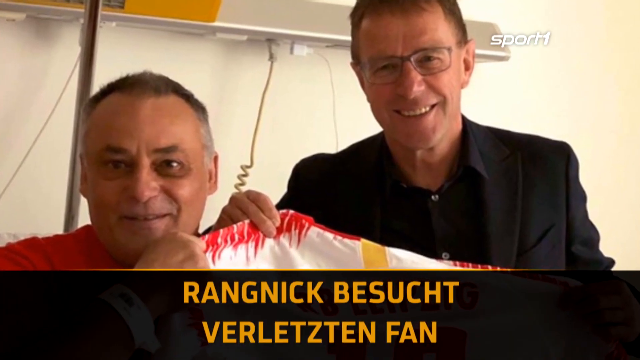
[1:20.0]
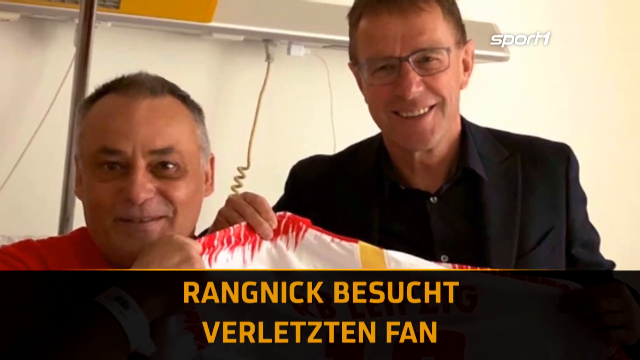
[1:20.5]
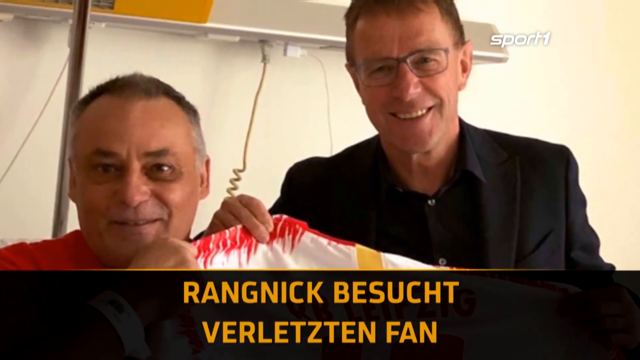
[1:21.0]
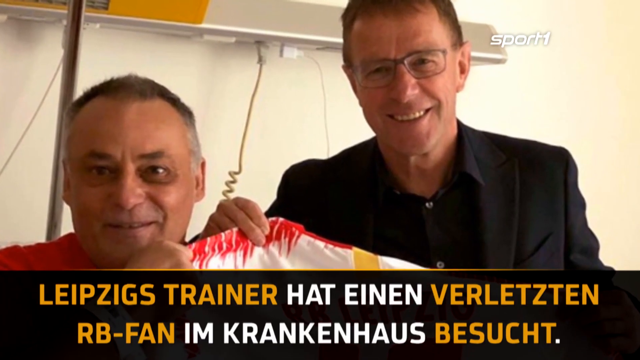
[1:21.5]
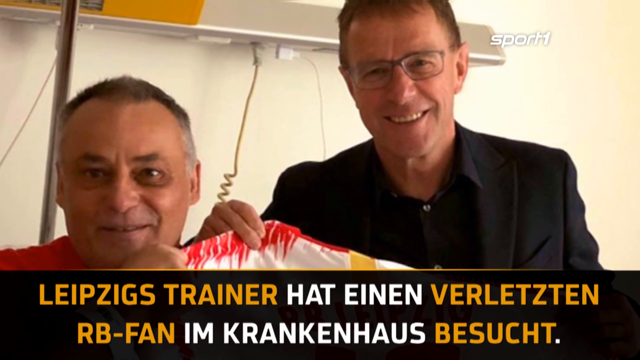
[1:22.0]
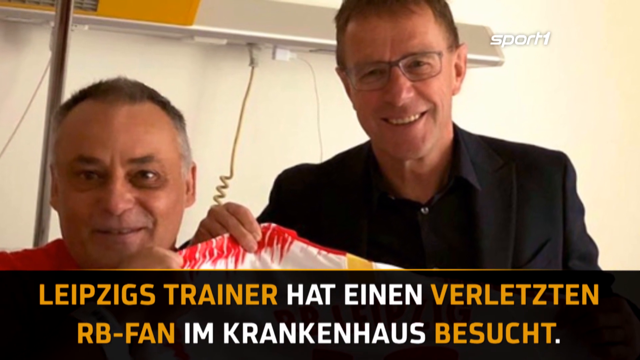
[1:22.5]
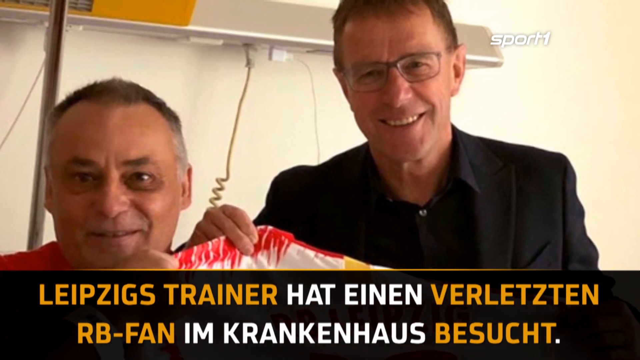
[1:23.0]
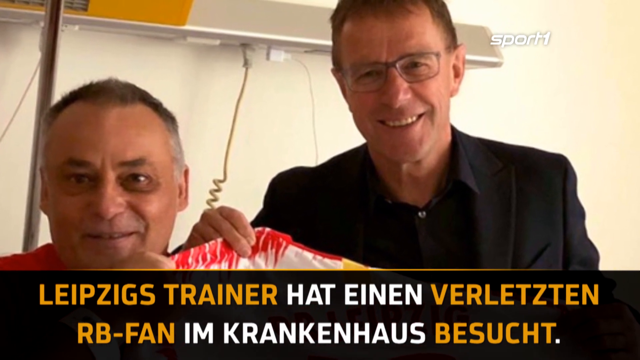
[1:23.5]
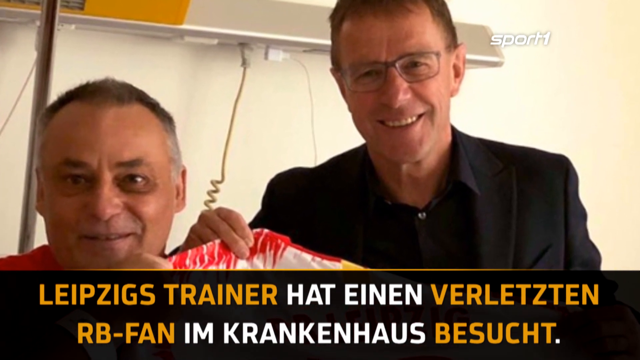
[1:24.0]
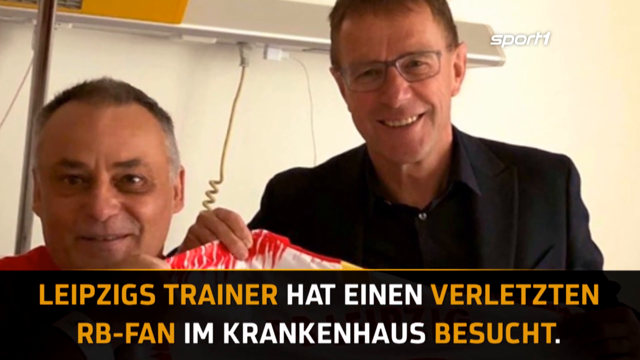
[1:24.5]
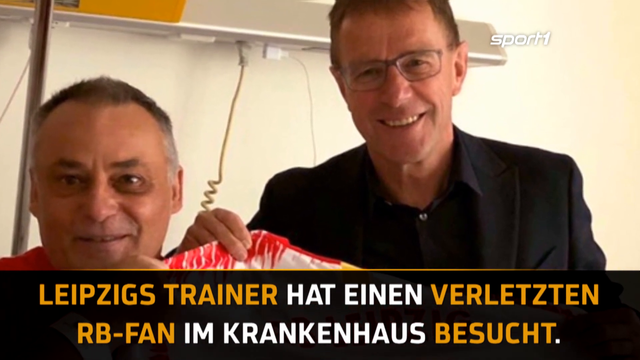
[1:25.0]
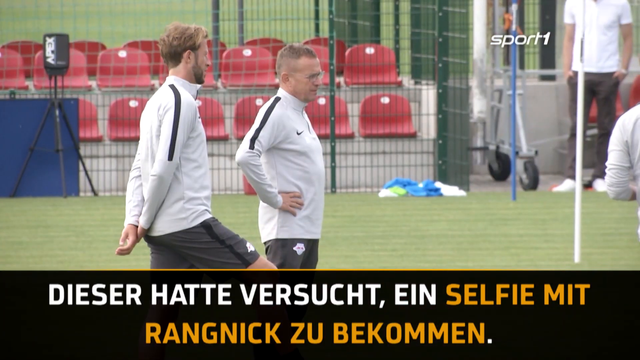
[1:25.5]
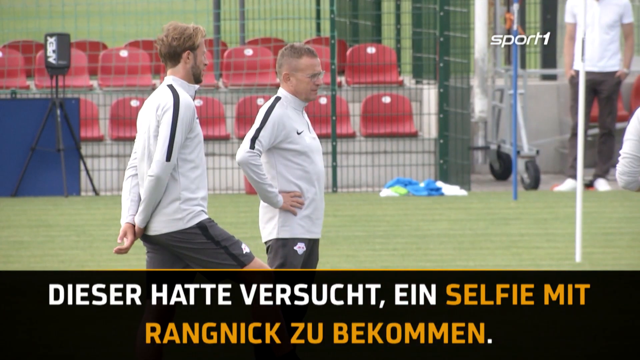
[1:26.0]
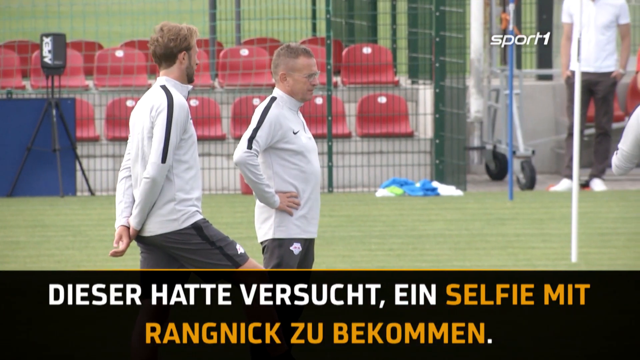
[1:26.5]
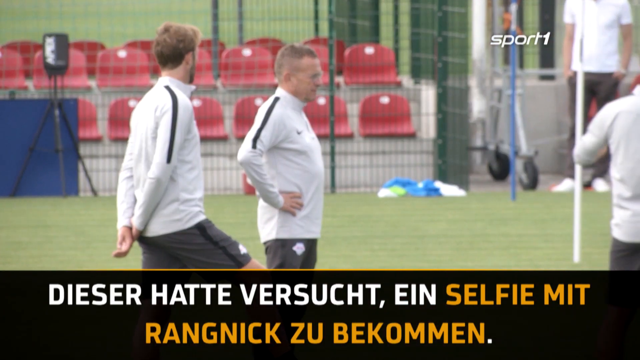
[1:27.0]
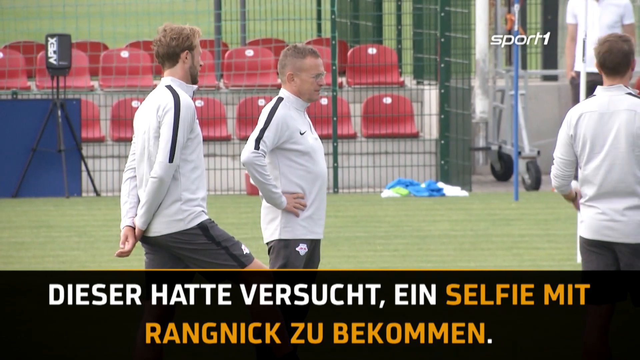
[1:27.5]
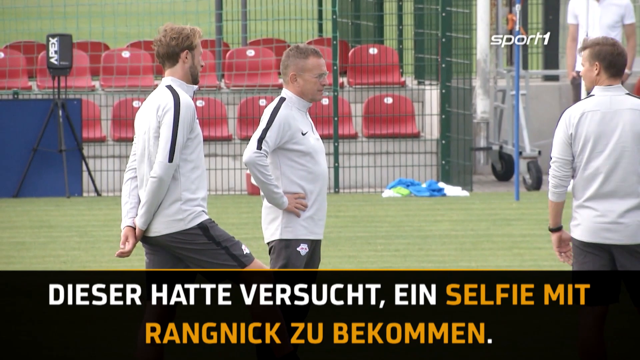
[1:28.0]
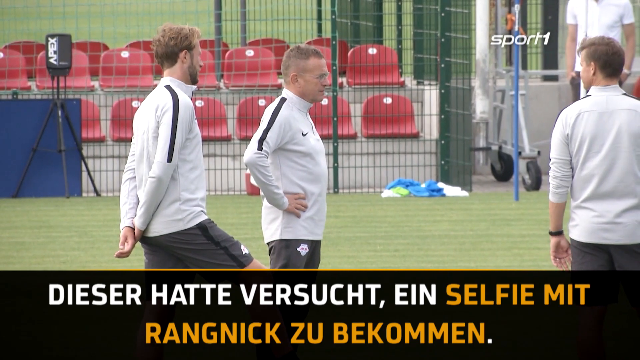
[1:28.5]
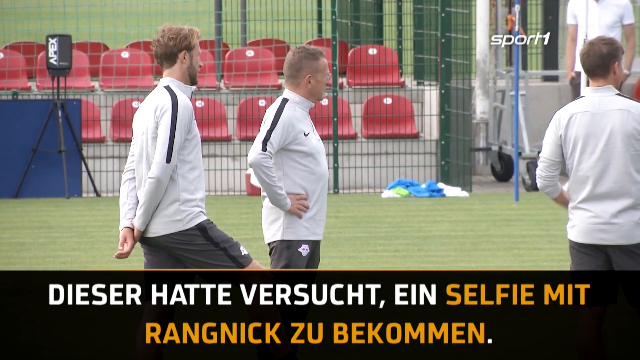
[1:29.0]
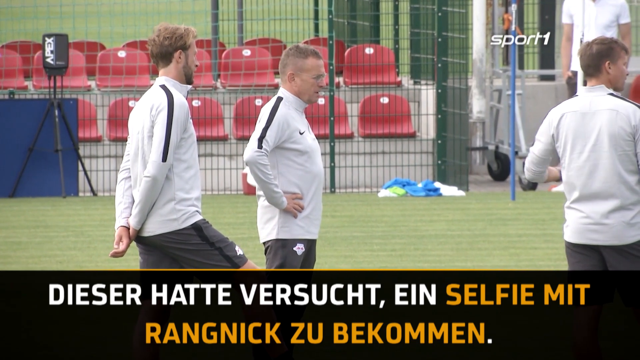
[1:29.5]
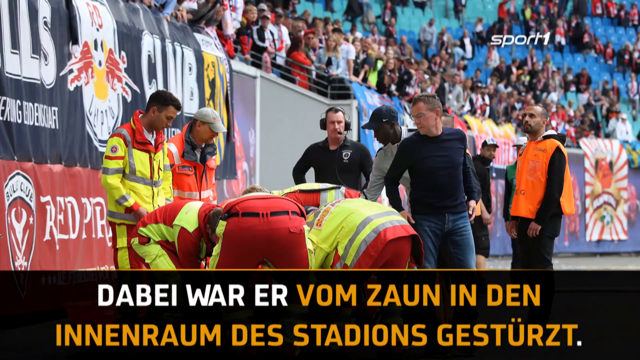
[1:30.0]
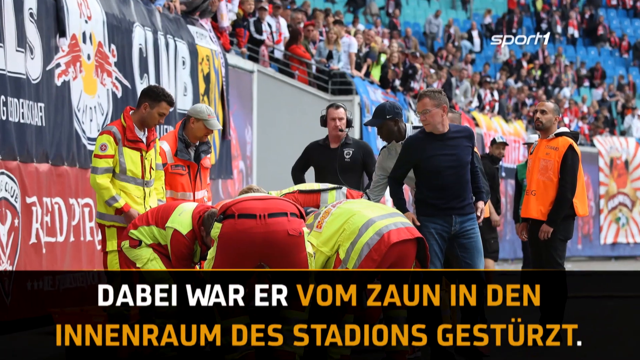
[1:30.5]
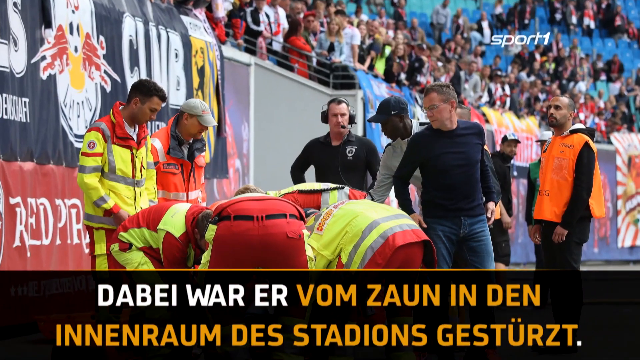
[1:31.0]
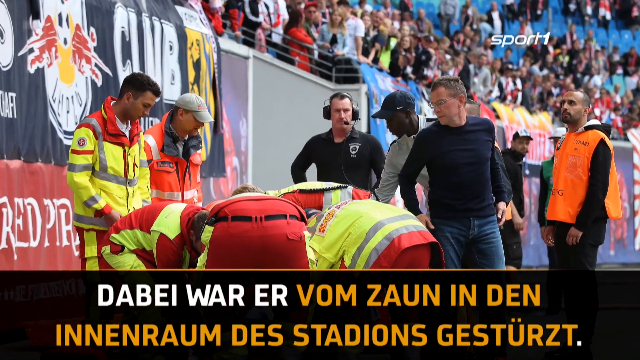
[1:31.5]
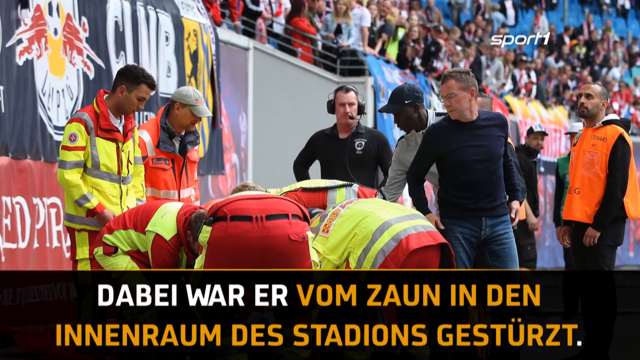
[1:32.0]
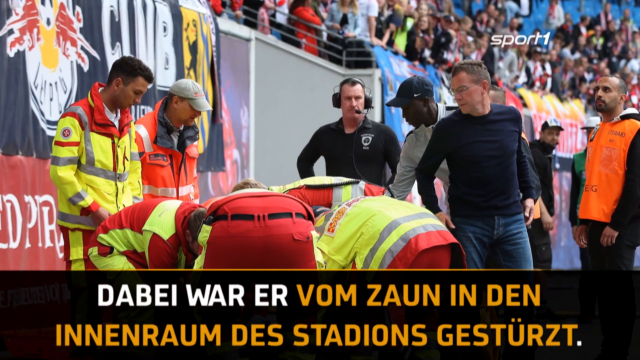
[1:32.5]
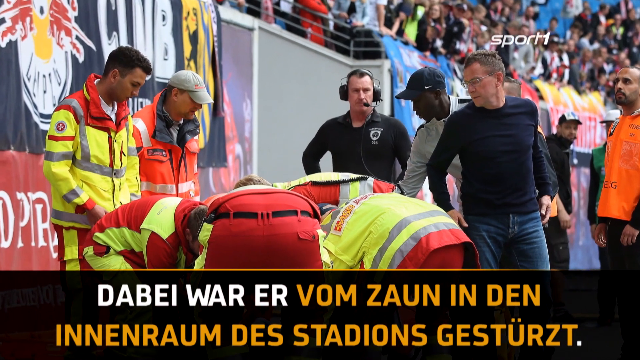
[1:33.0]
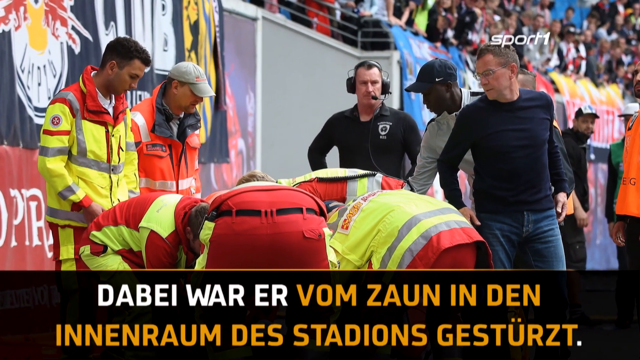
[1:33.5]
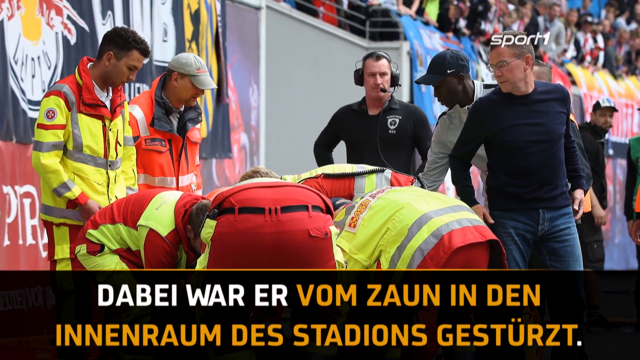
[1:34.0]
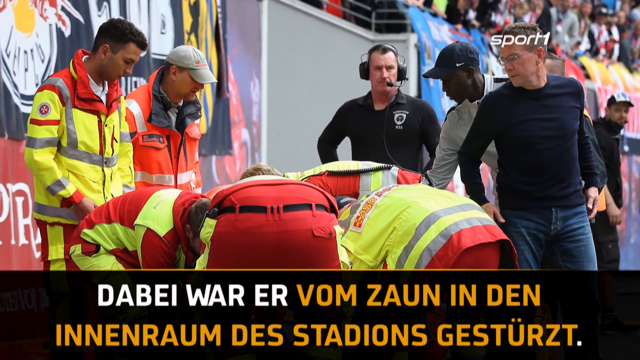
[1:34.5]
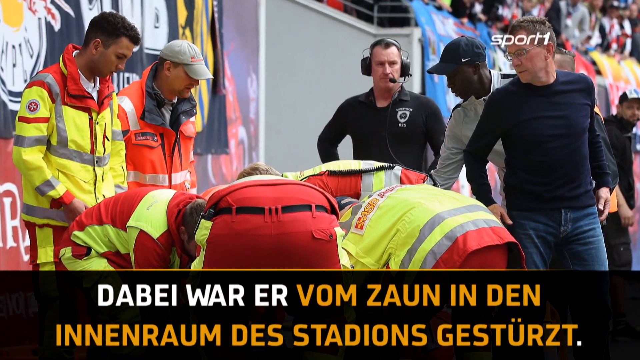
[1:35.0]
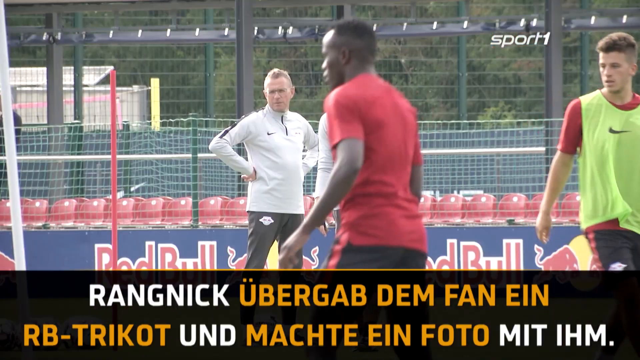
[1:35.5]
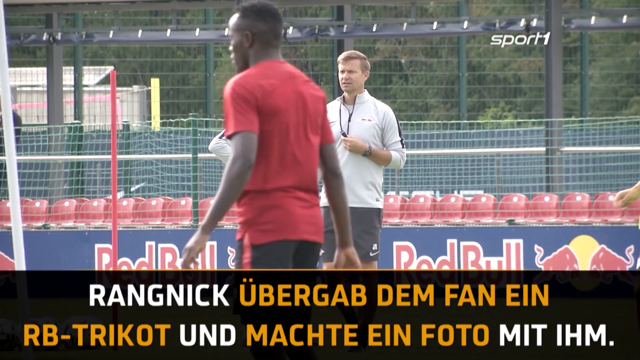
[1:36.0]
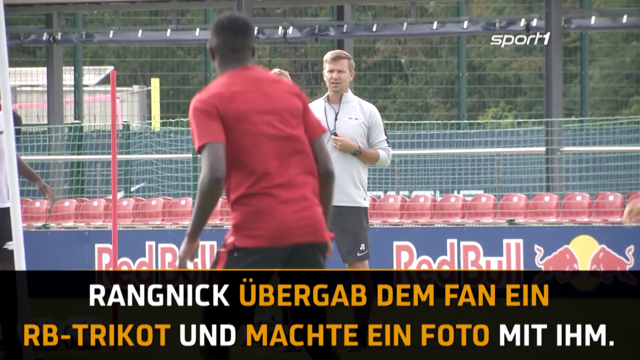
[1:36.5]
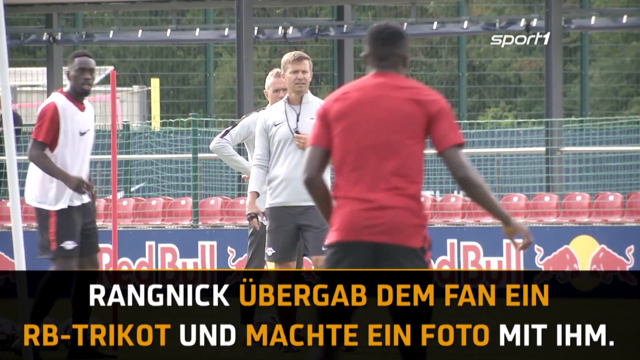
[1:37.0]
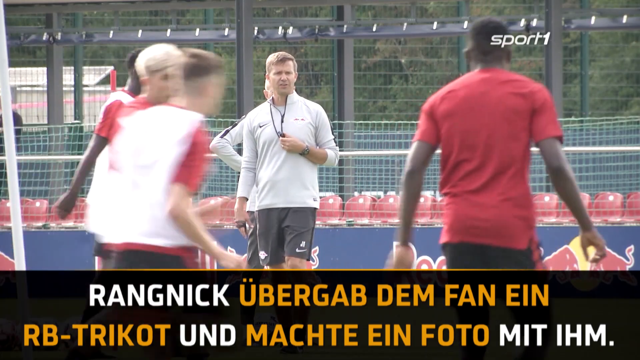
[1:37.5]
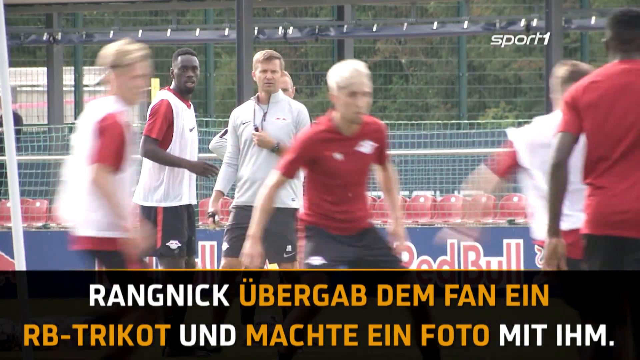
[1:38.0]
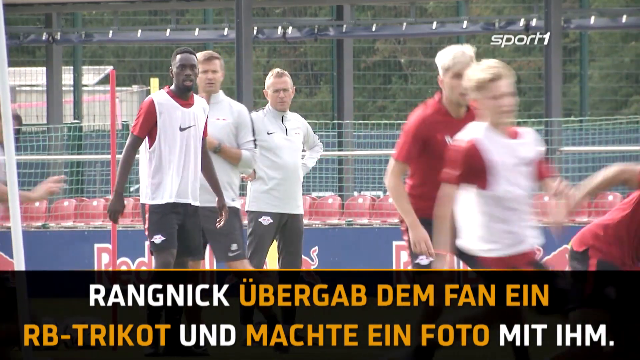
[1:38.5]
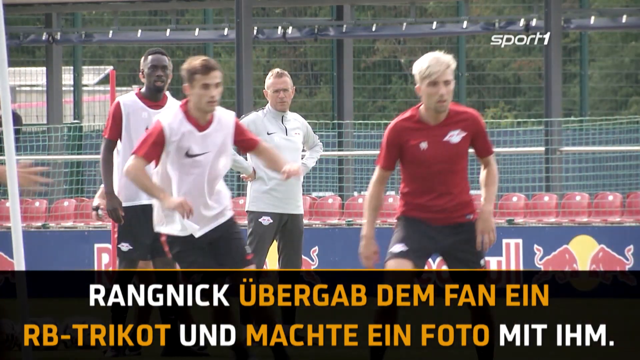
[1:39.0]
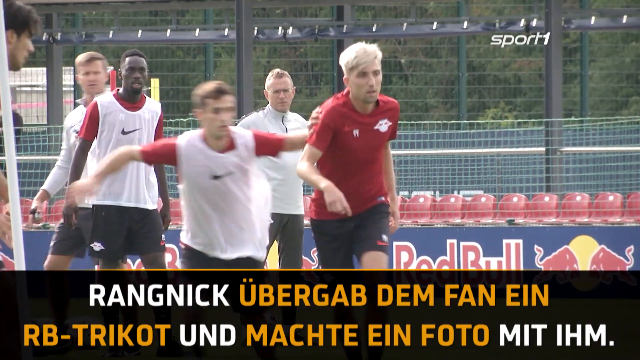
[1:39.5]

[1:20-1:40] The video zooms in on a video or still photograph of two men holding up a jersey, of which only the top is visible. One man is taller than the other and more central to the image; this main man wears glasses. Then footage shows him in a white long-sleeve shirt, standing around with other men in white outfits who appear to be coaches or staff members on the team, since they are a bit older. They are all looking toward the field. The video then changes to footage of a team, apparently practicing, with a coach wearing a whistle around his neck. In between the videos, the video zooms in on a still photograph of a group of people surrounding someone; they look like they may be EMTs, possibly suggesting a health incident involving one of the coaches or players.